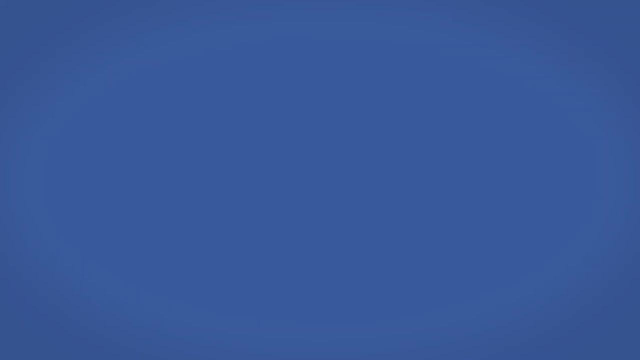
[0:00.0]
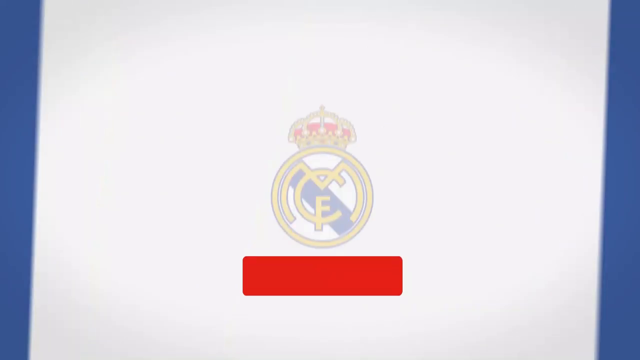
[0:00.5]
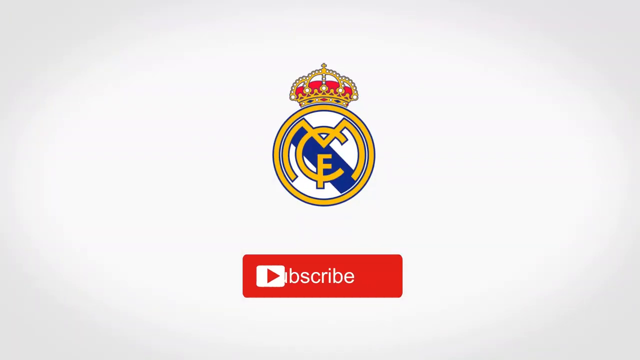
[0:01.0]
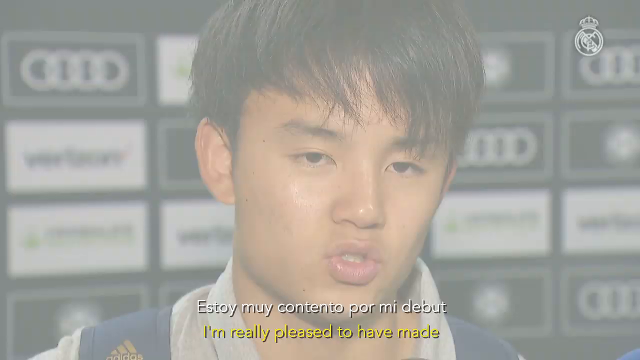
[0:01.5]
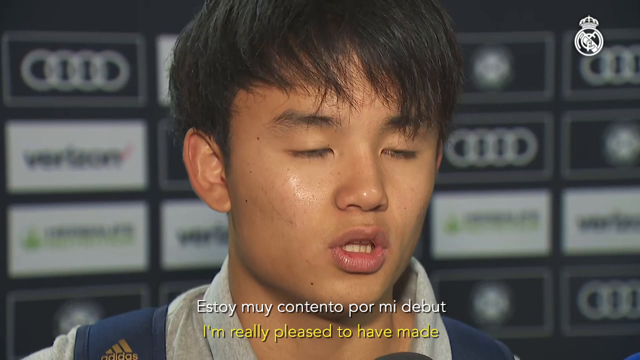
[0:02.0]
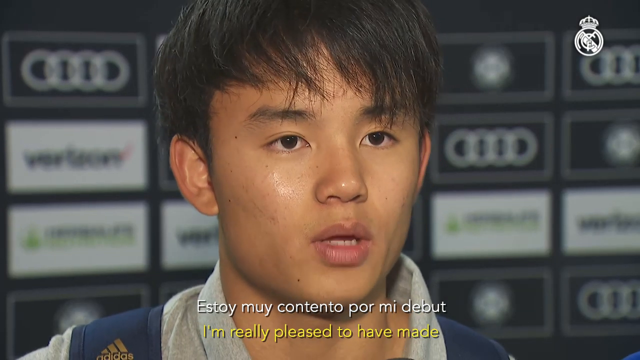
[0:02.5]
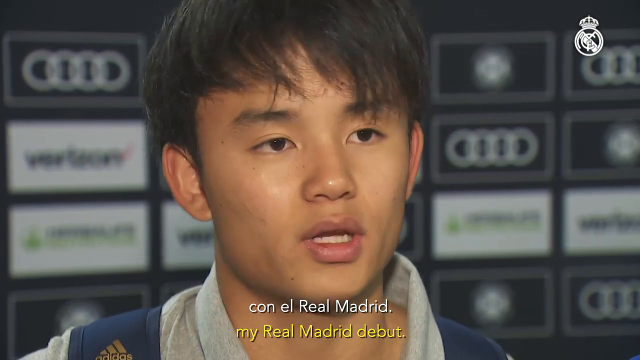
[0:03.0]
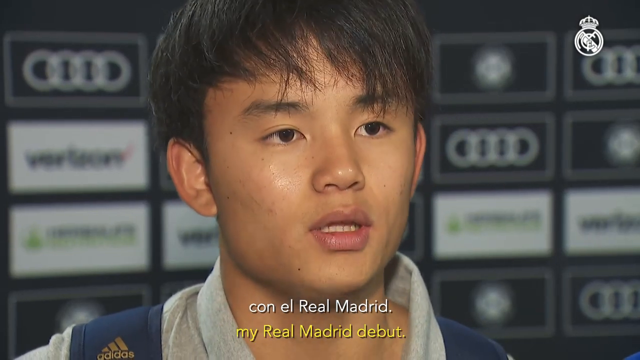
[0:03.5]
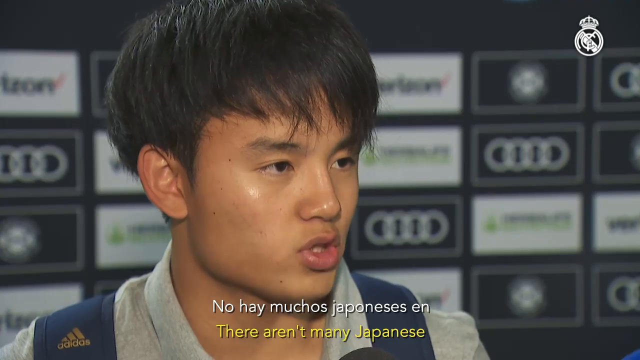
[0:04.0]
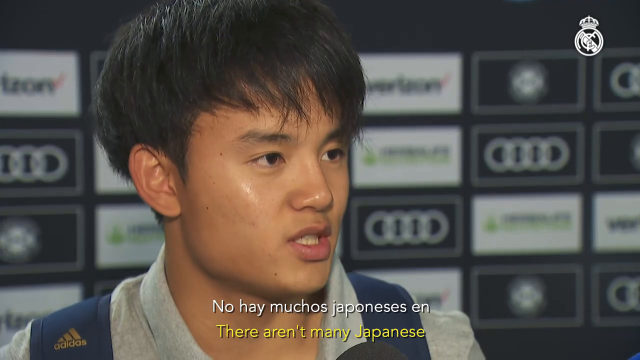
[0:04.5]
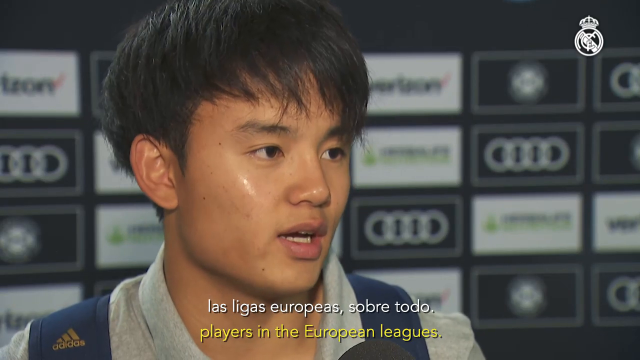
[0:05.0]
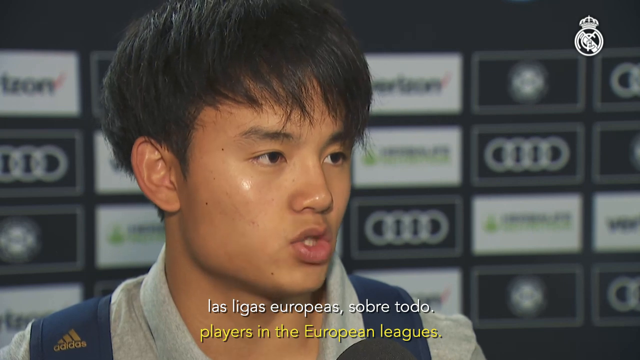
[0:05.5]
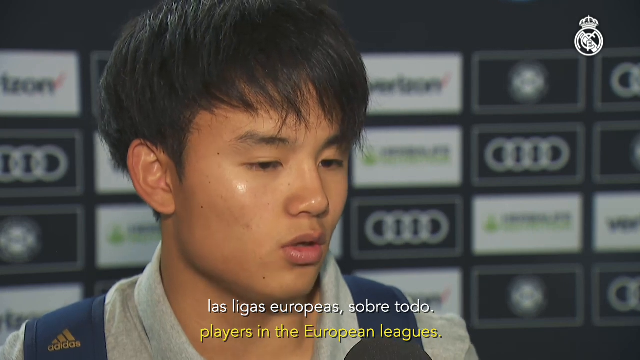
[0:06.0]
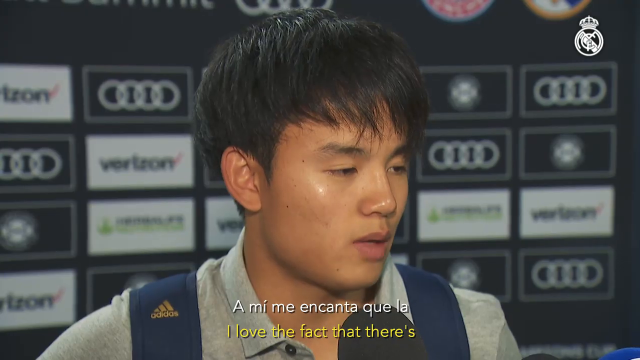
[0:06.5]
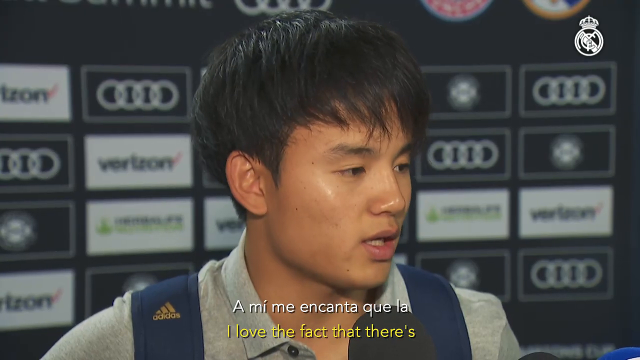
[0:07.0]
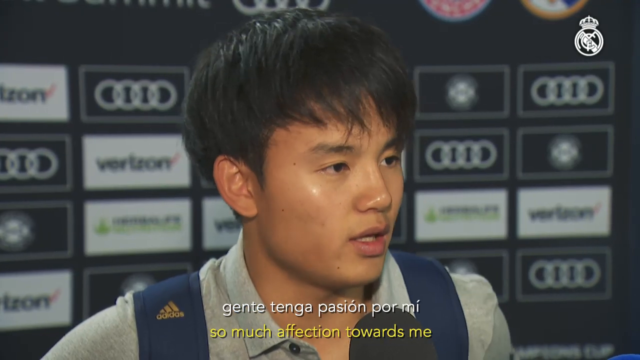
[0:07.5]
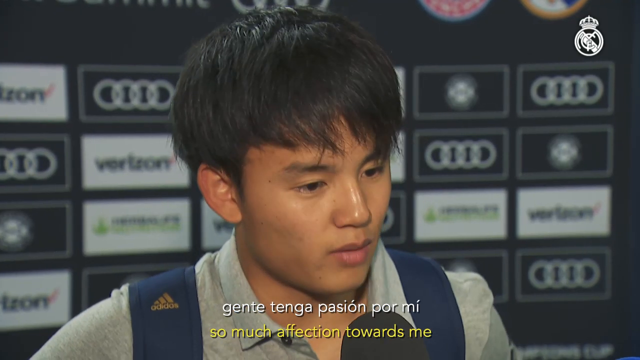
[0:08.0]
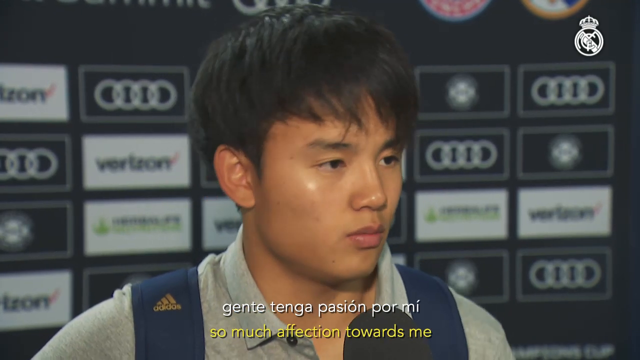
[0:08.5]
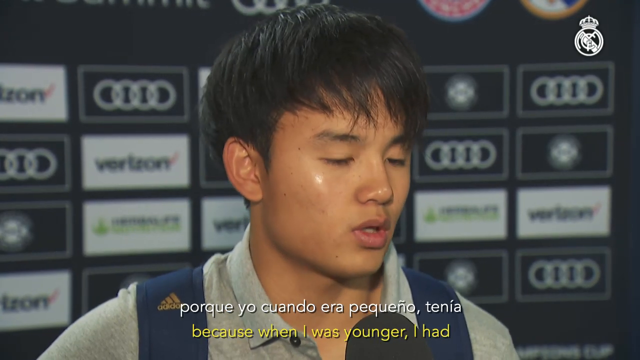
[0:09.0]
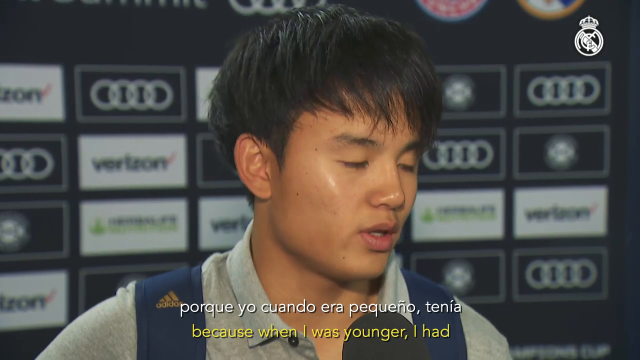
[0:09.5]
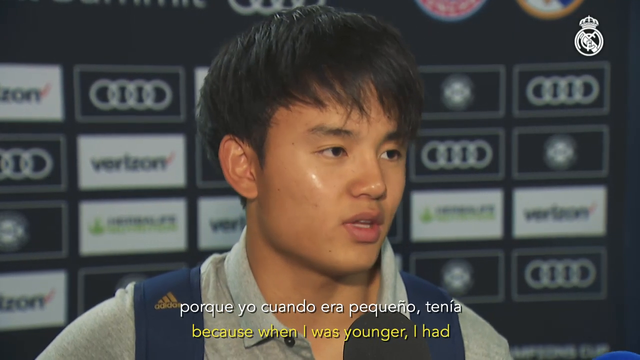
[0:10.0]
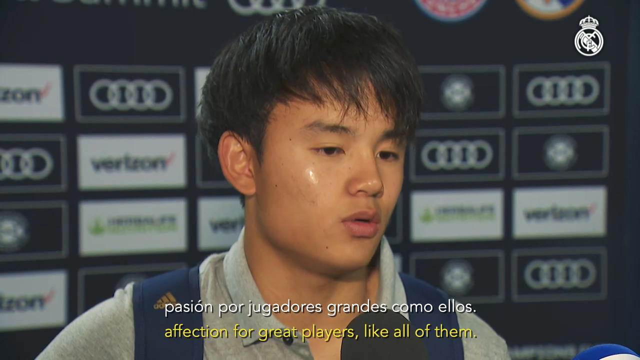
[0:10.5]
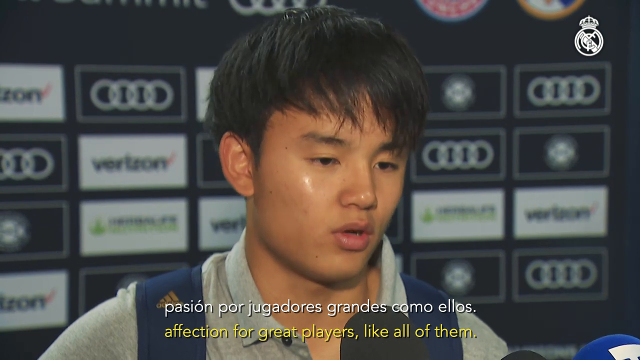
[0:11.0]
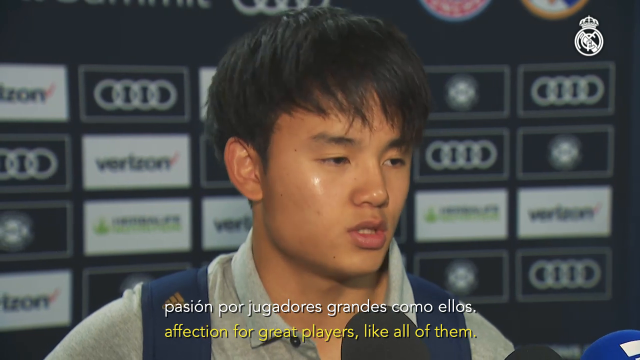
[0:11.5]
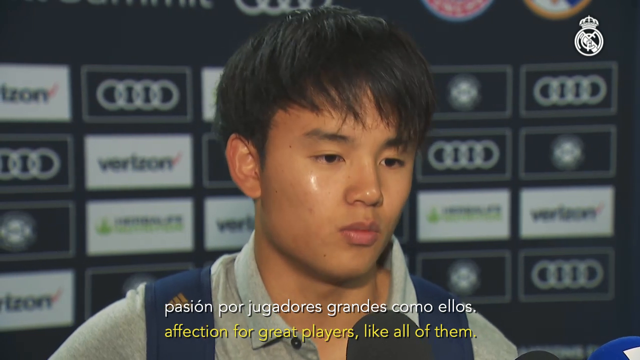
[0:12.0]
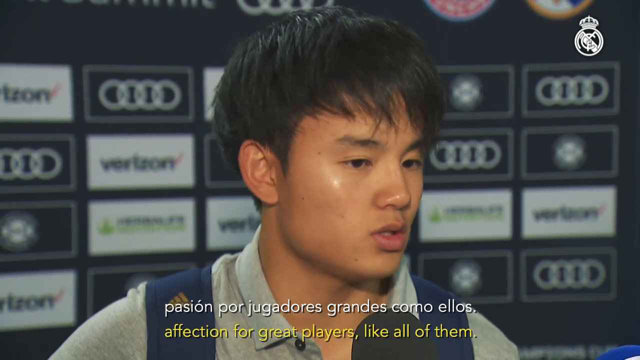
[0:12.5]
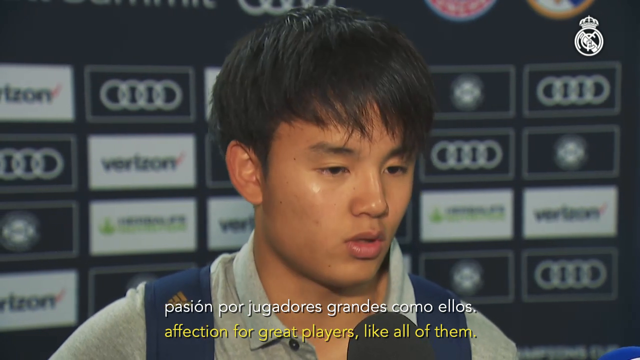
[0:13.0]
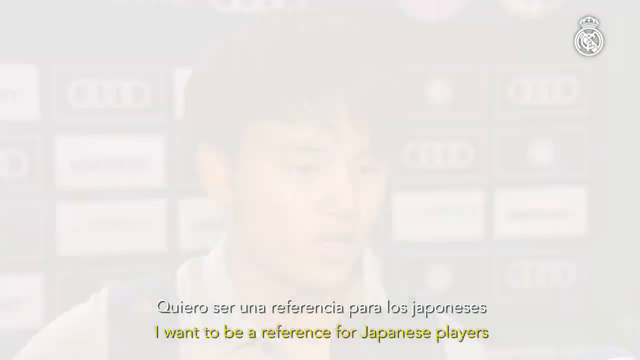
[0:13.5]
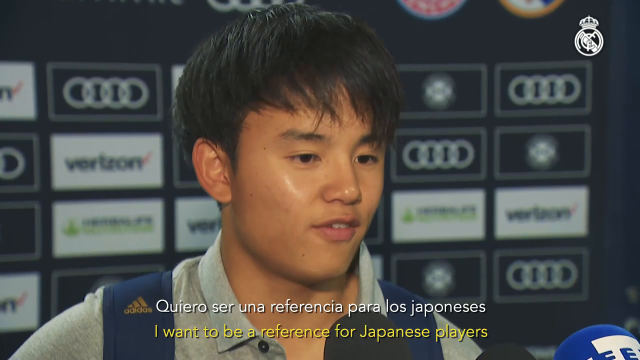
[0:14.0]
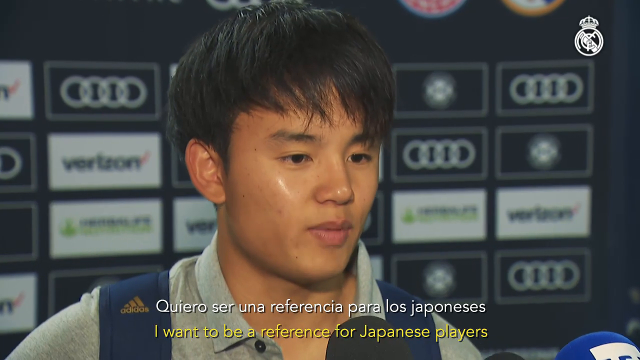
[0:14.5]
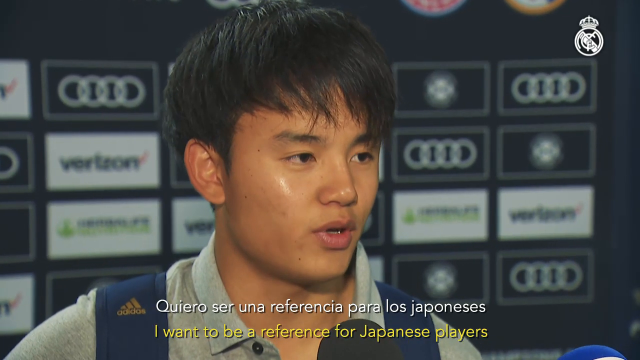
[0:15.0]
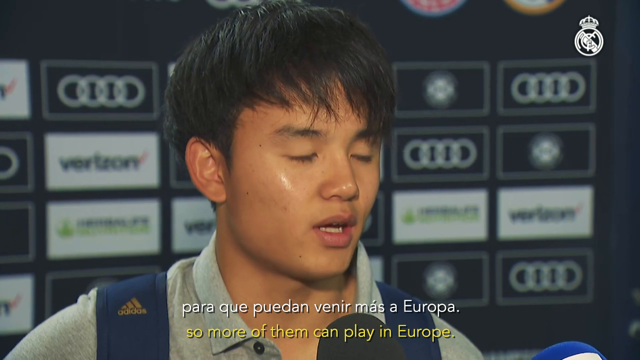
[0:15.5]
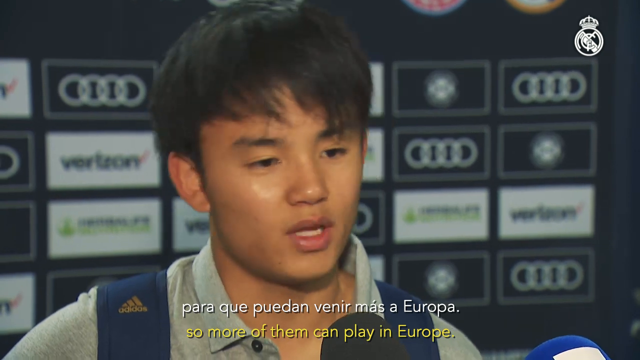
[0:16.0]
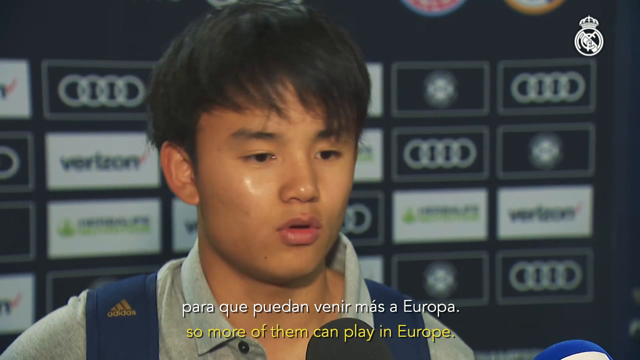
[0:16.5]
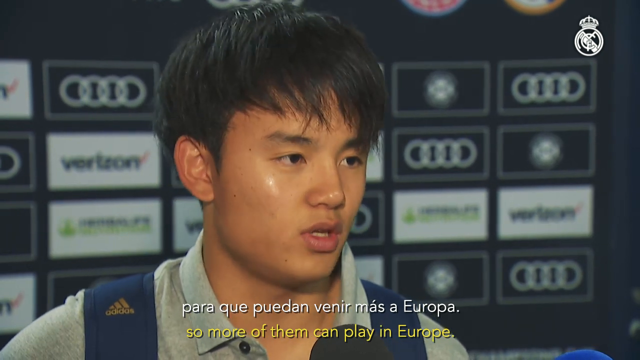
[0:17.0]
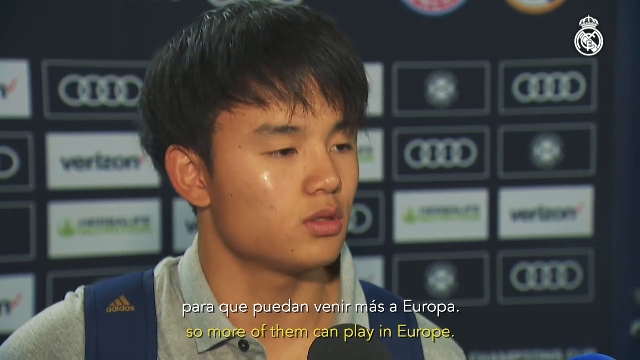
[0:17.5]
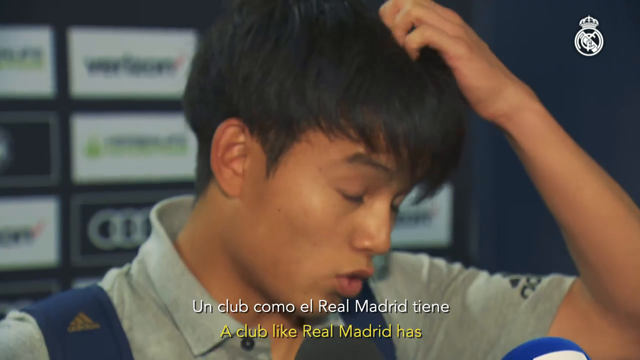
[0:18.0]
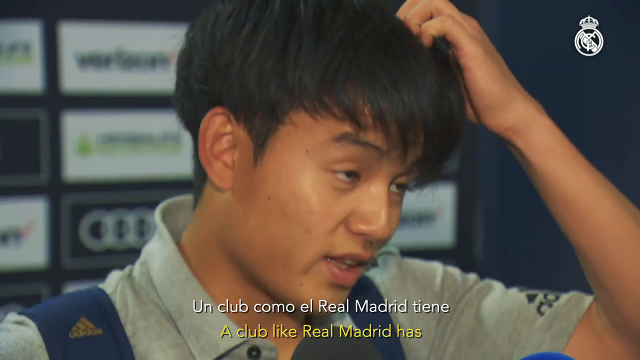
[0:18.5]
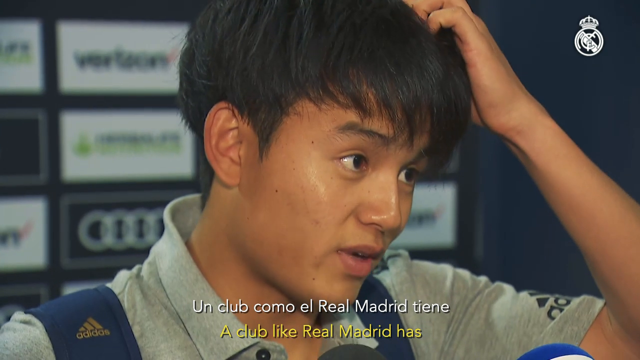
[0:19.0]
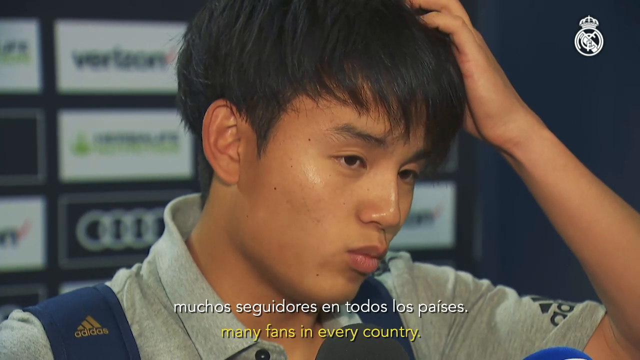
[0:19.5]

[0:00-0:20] The video opens with a logo that looks like a red crown on top of a gold circle. It then cuts to a sort of close-up shot, from the head up, of an Asian man with black hair combed into bangs. He is talking to someone off to the right of the camera, apparently an interviewer, and subtitles, in Spanish or Portuguese, appear at the bottom; the words "Real Madrid" are visible in them. He is standing in front of a sponsor wall with small rectangular sponsor banners, where Verizon and Audi can be seen, while the other two sponsors cannot be made out. It is almost a single camera shot of the man being interviewed.